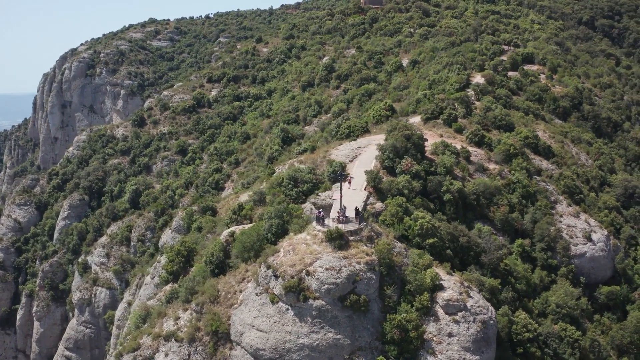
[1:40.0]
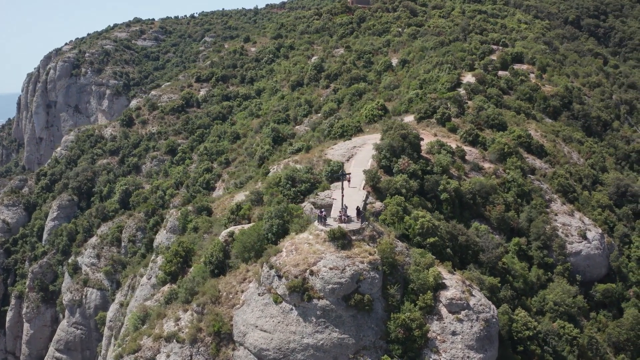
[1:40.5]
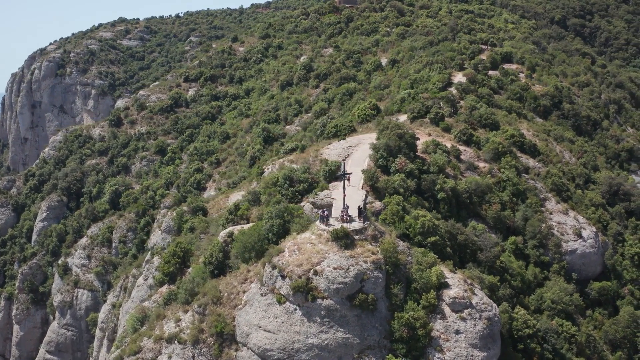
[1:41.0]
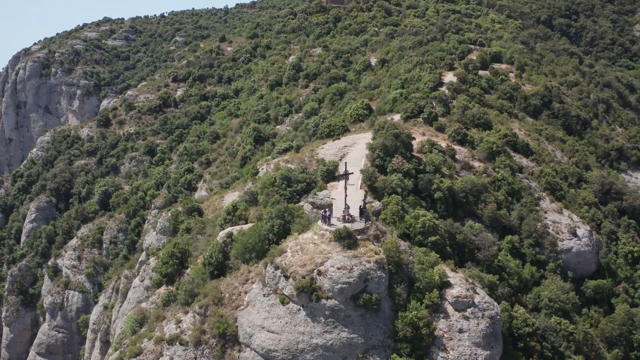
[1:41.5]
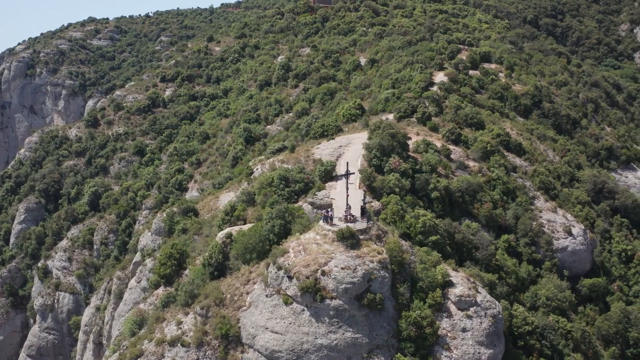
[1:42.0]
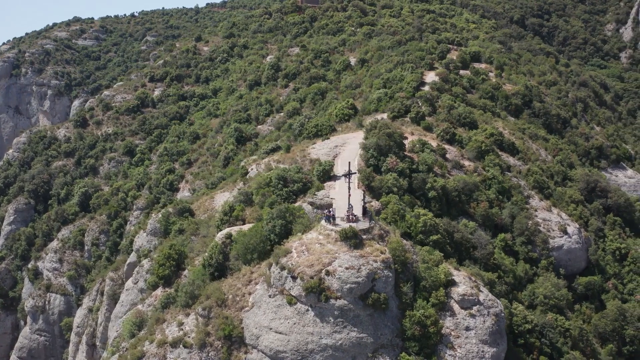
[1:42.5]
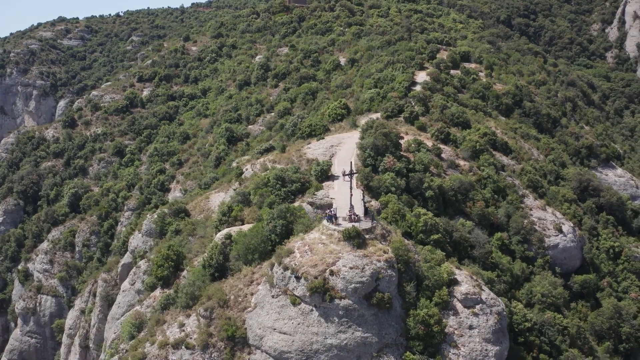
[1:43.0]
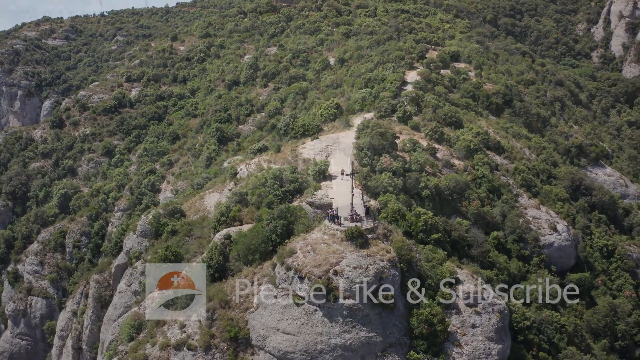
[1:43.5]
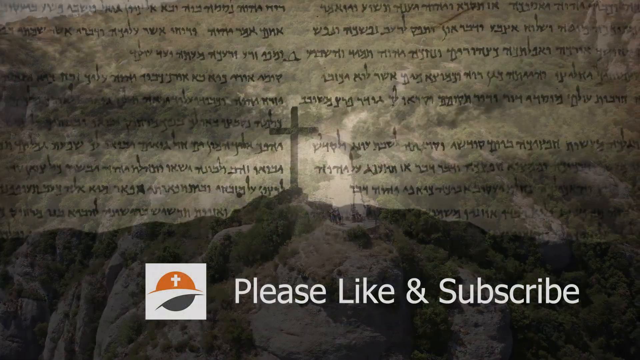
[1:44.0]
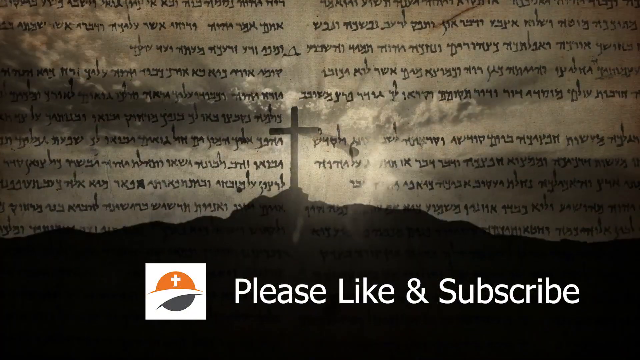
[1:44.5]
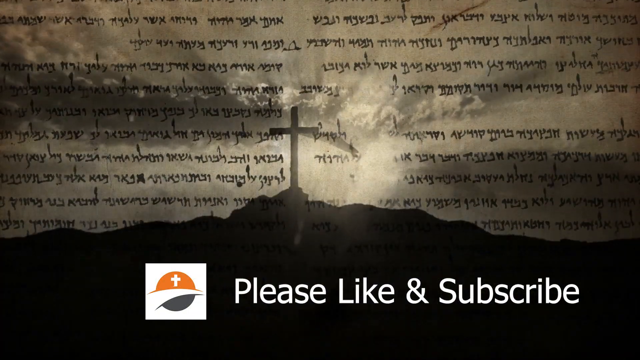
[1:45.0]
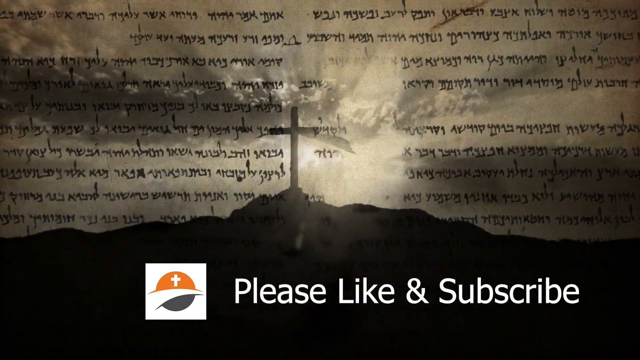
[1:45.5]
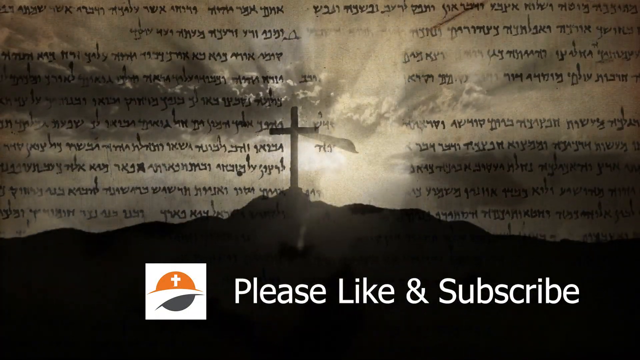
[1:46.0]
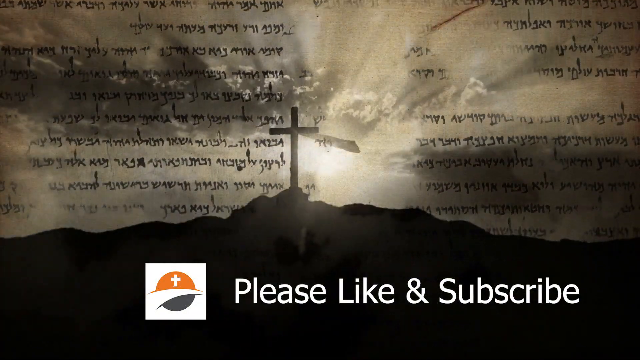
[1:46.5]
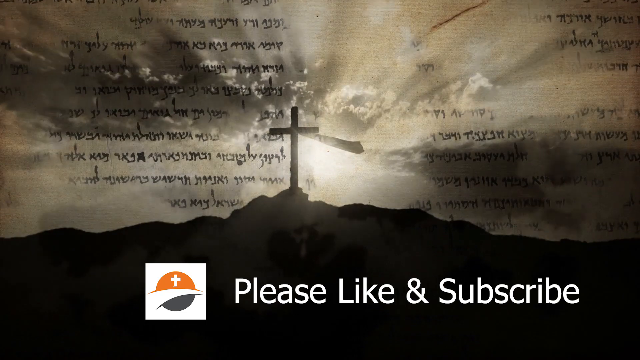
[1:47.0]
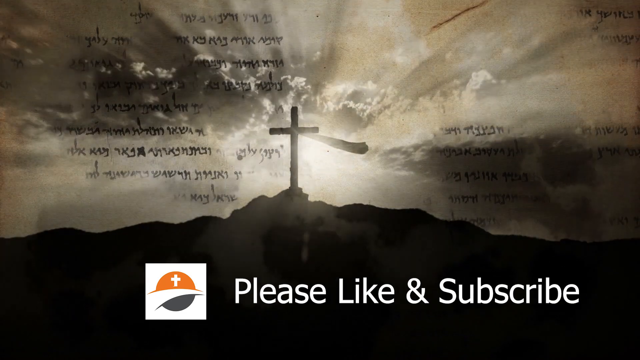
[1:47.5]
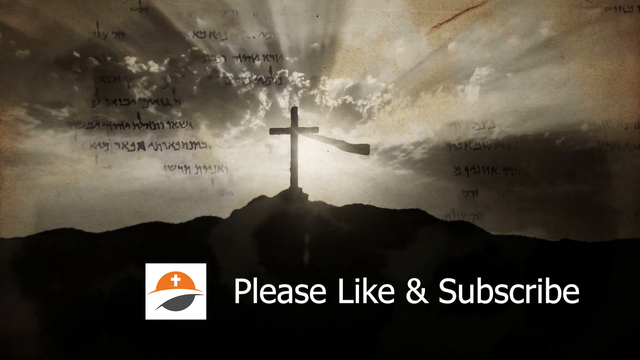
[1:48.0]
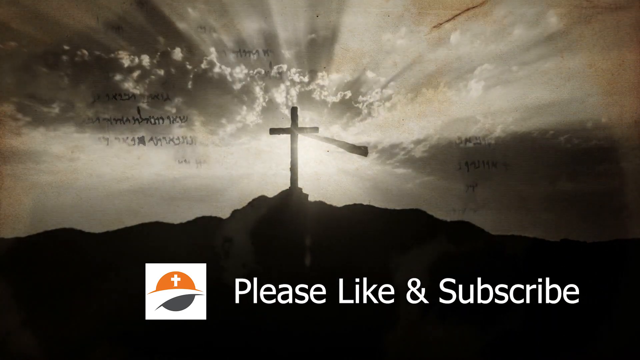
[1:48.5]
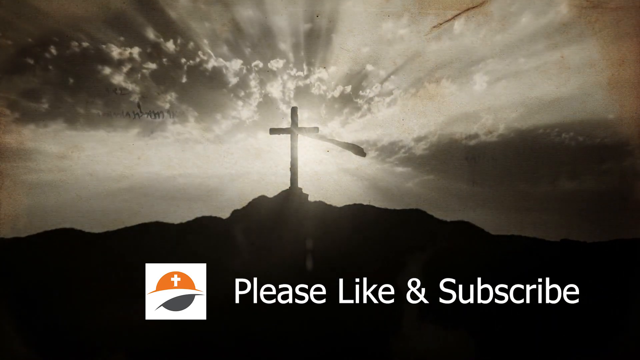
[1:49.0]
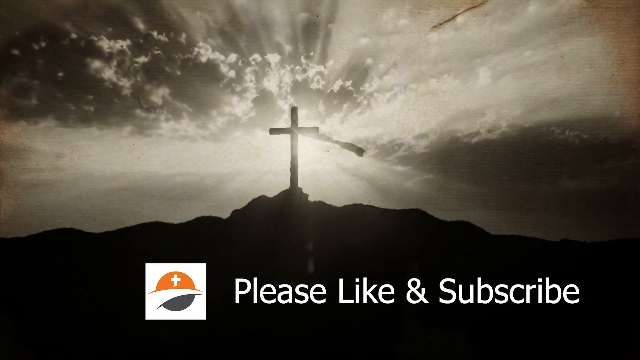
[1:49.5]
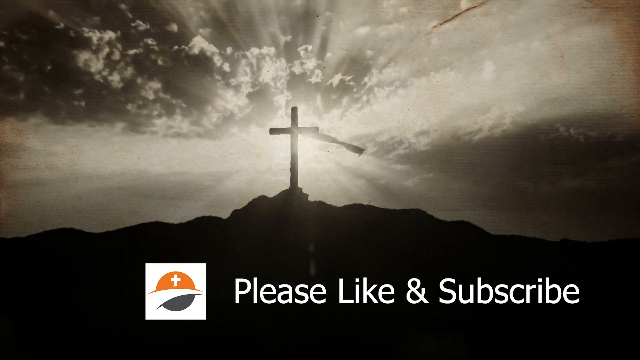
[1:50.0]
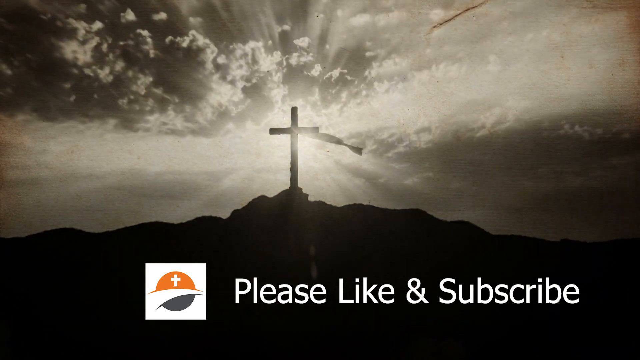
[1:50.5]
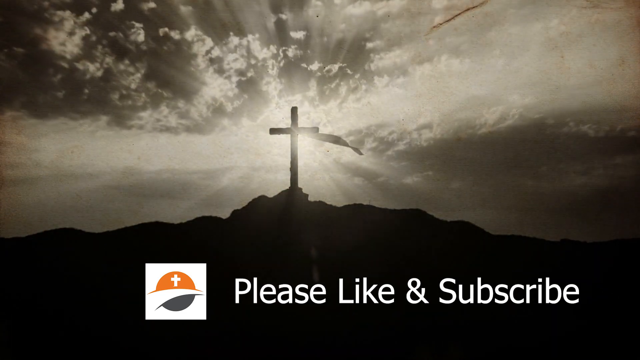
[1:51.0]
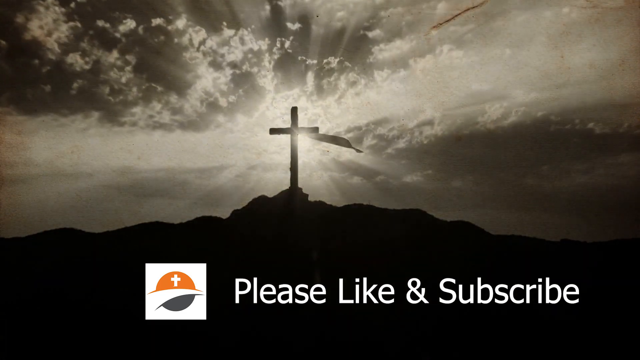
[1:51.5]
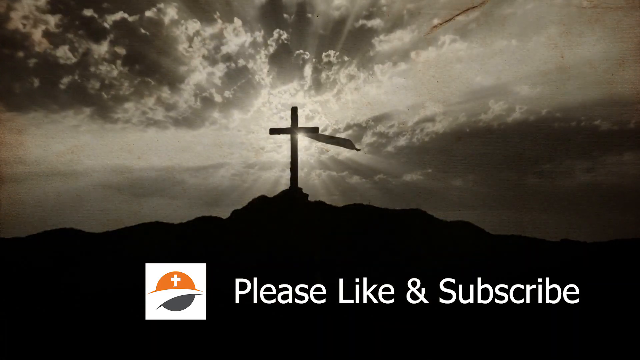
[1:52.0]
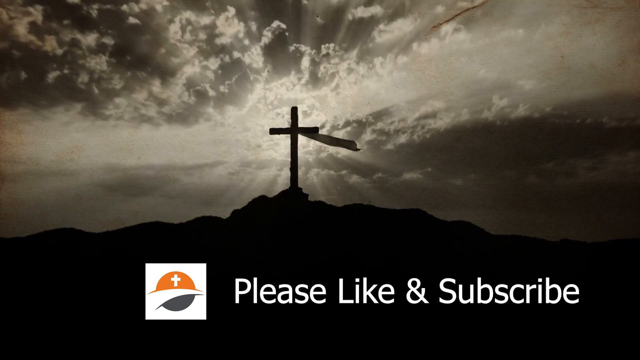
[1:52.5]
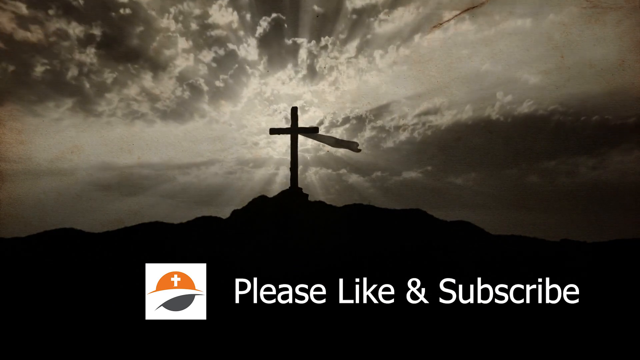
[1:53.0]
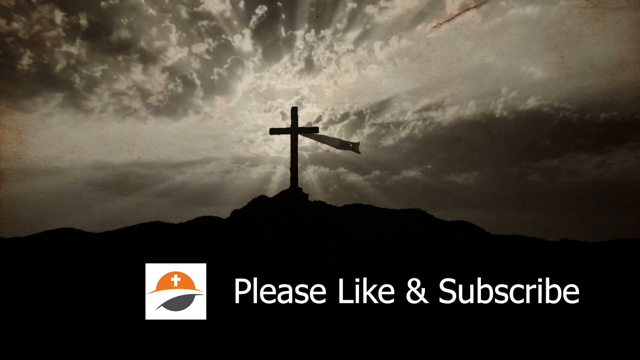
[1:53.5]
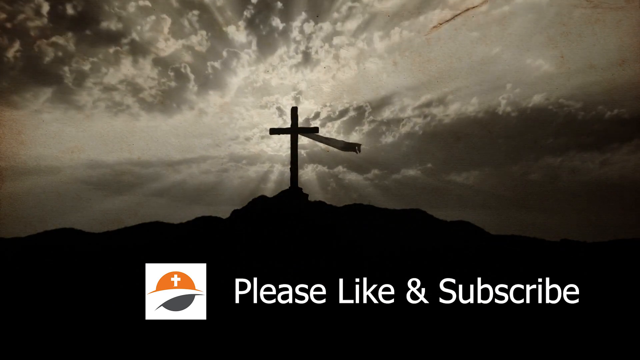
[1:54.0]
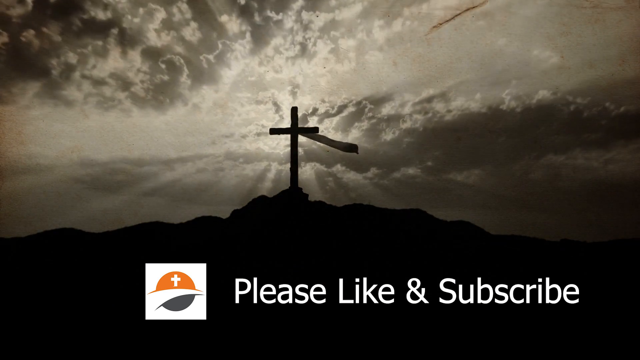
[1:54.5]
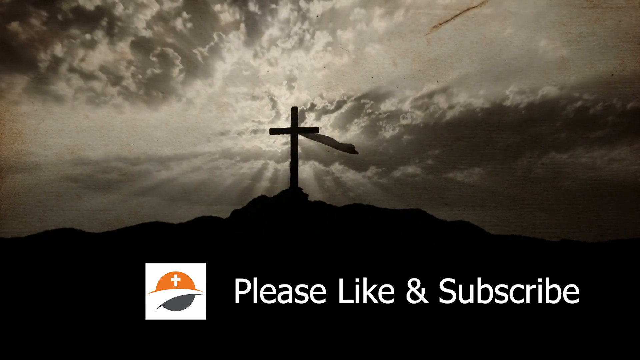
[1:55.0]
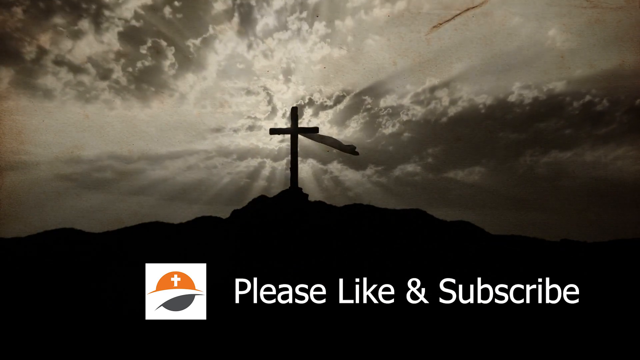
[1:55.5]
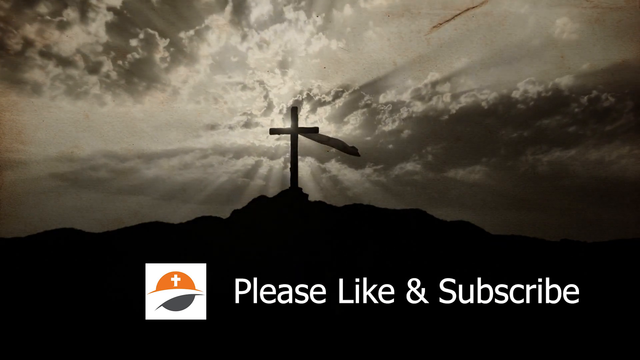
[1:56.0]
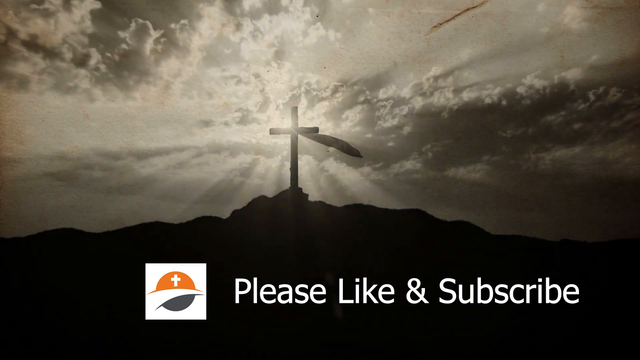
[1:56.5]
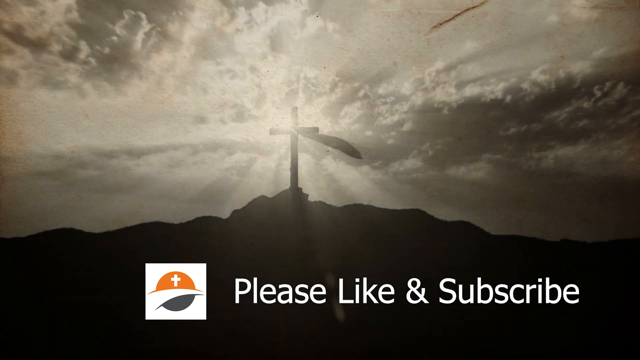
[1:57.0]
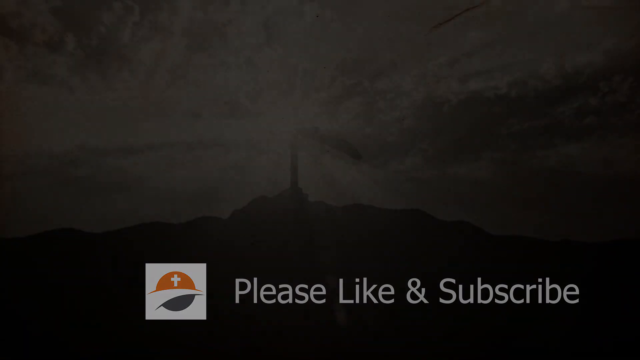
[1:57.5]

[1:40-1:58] An aerial view shows the hilly mountains, with the cross at the top and people gathering there. Small vegetation grows on top of the rocky hill. The text "please subscribe and like" appears. The cross stands at the top of the mountain as the sun sets. Black writing resembling Hebrew, Greek or Indian script occupies the screen, then disappears as a cloud appears. The sun shines brightly on the cross where its two pieces meet, and a cloth on the cross is blown by the wind.